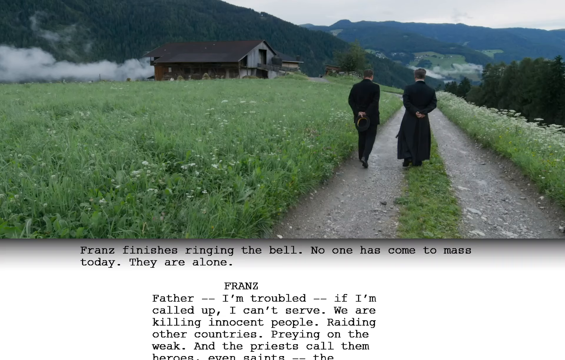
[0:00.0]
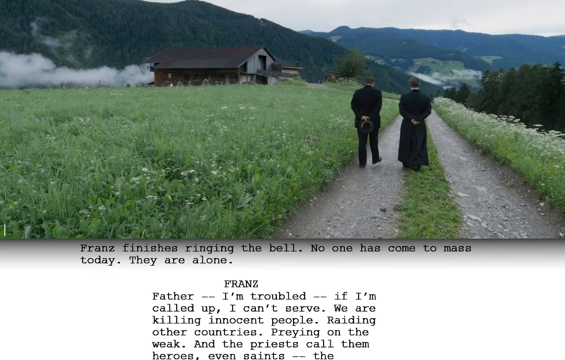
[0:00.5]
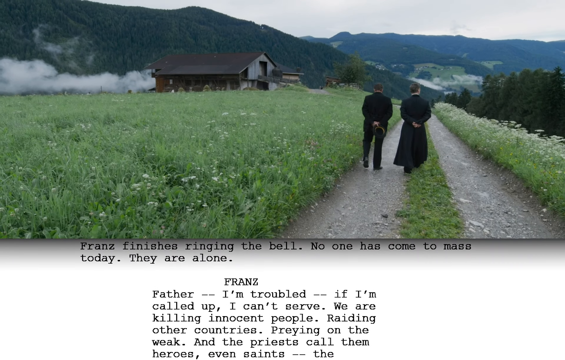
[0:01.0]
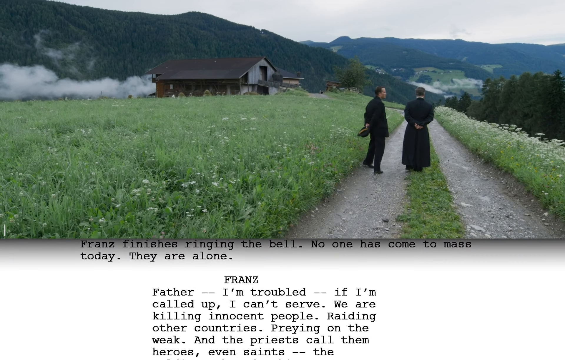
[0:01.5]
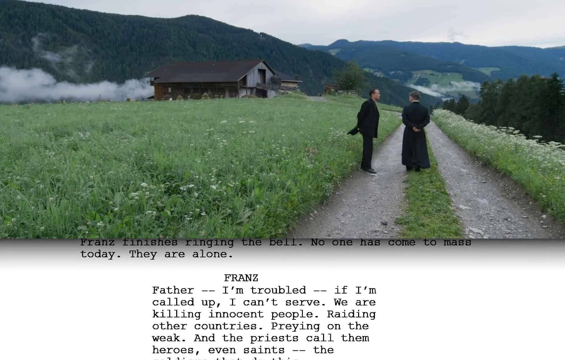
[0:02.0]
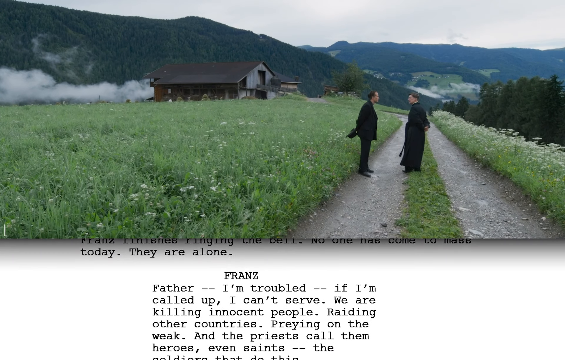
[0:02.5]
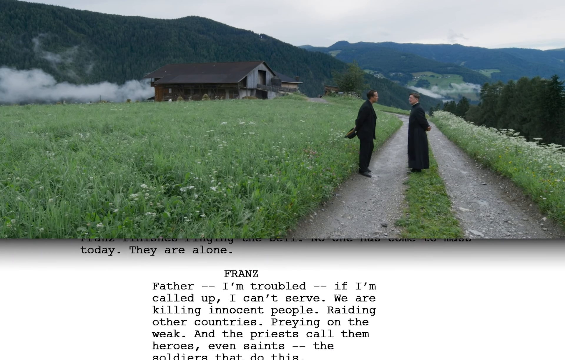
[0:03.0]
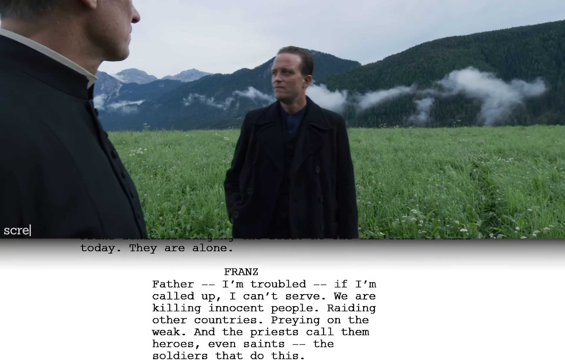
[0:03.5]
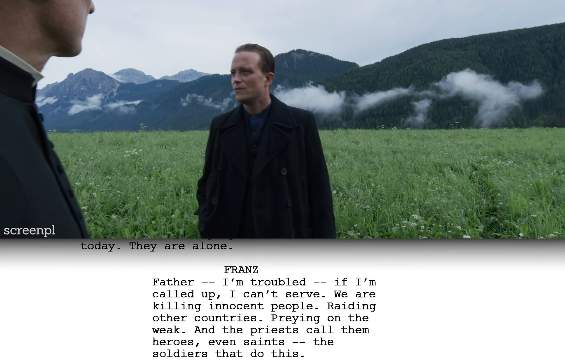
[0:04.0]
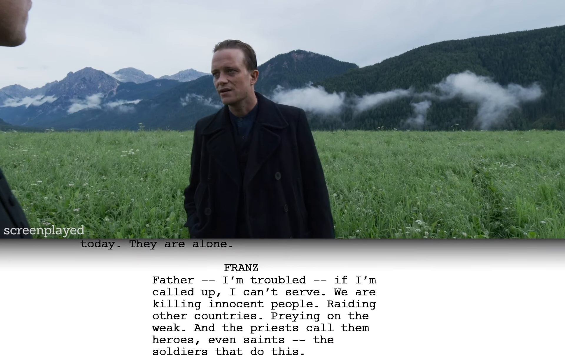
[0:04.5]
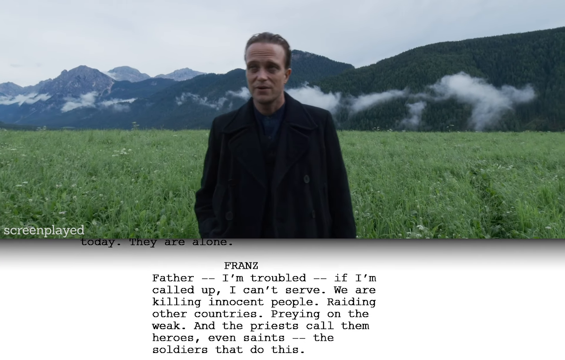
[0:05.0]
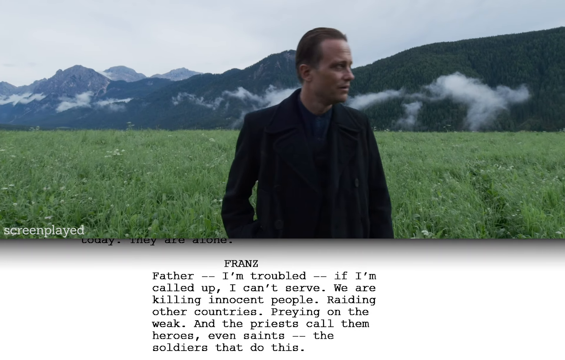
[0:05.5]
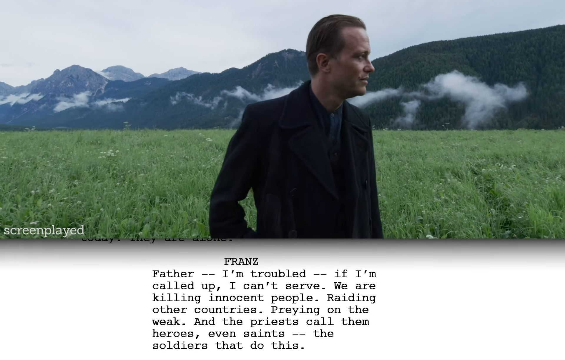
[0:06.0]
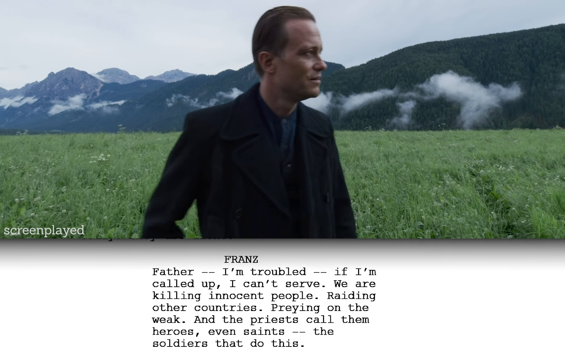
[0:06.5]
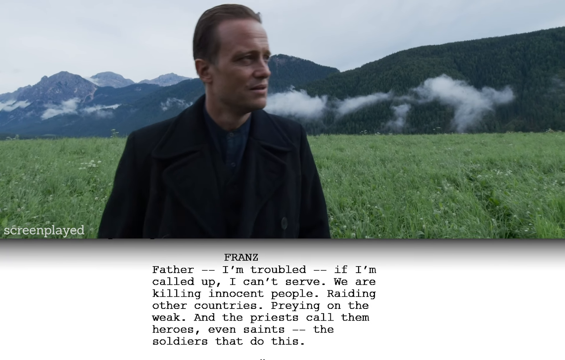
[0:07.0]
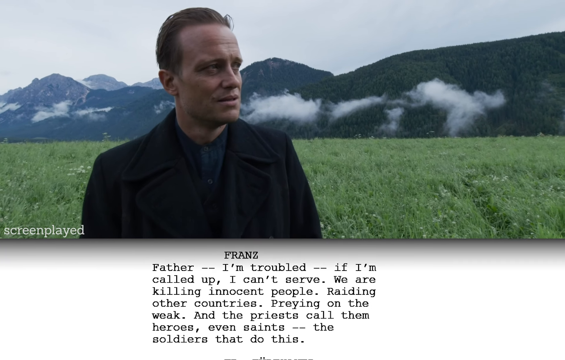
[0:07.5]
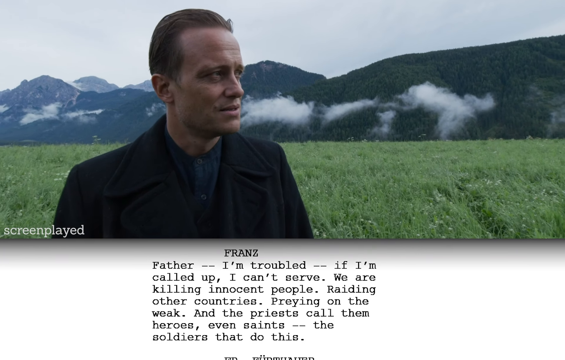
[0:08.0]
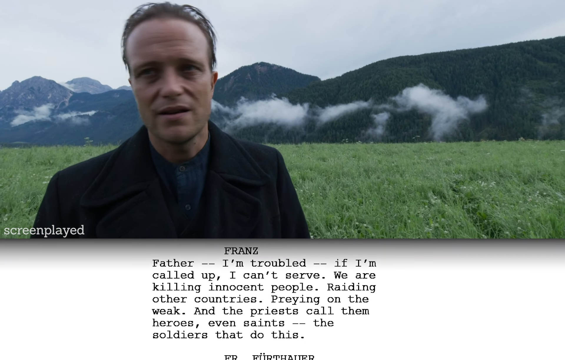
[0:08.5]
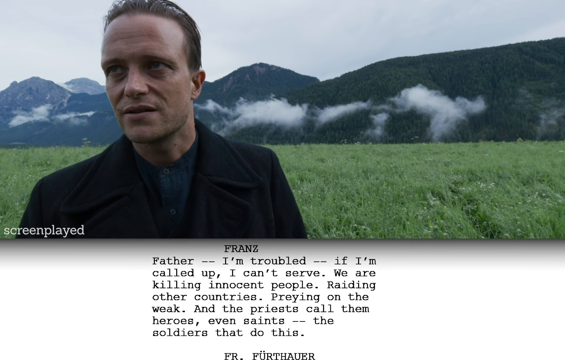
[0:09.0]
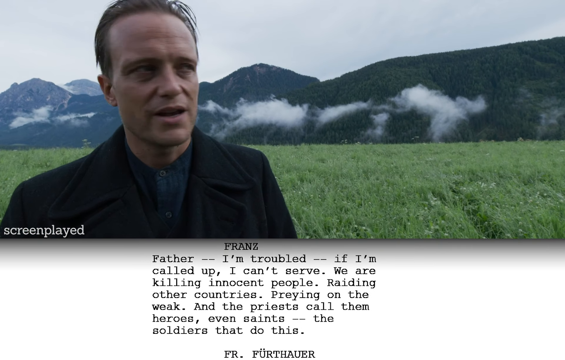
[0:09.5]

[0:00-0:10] Two elderly men take a walk on a dusty road. The area seems to have very cold weather, with mountains in the background and a lot of clouds around them. The camera zooms in on the man on the right-hand side, who seems to have a lot to say. The place looks very deserted, with not many houses around: there is only one wooden house, and everything else is trees, mountains and grass. Text telling a story appears at the bottom of the screen and scrolls up.